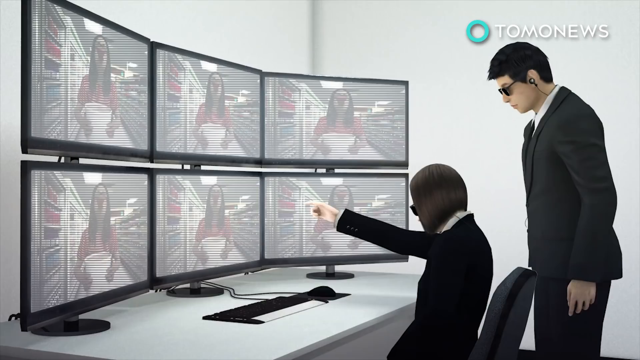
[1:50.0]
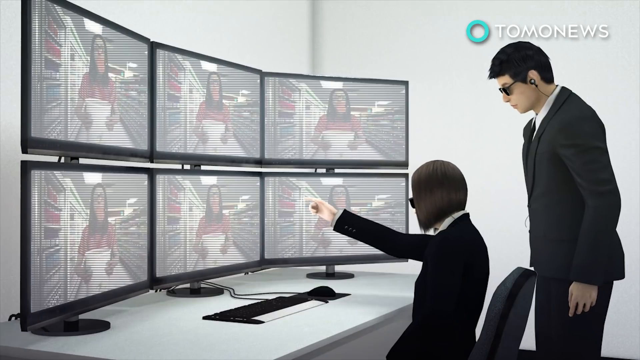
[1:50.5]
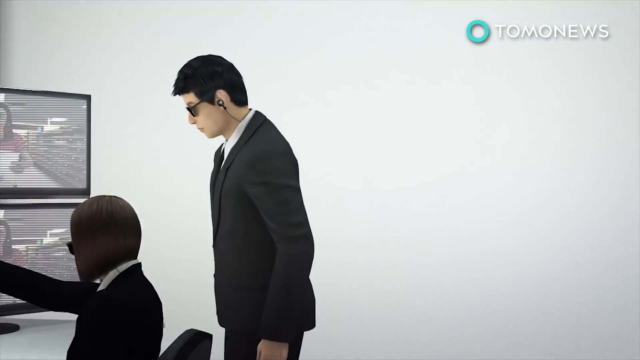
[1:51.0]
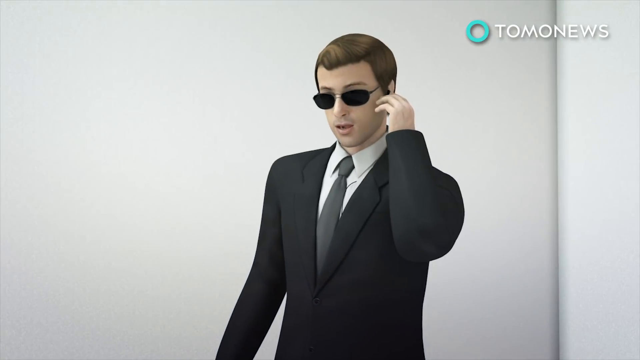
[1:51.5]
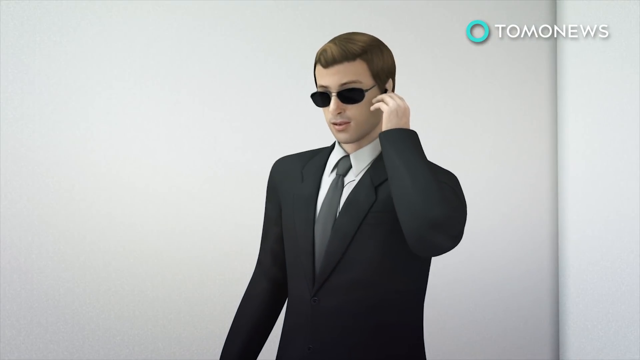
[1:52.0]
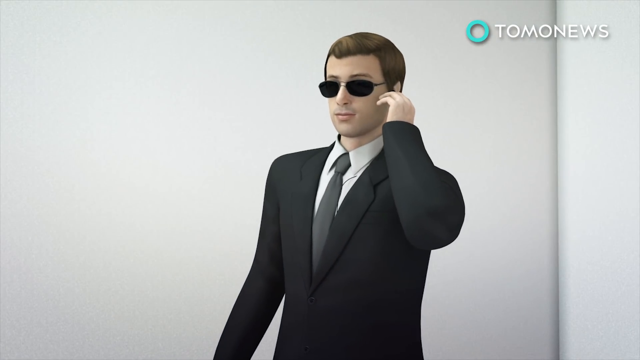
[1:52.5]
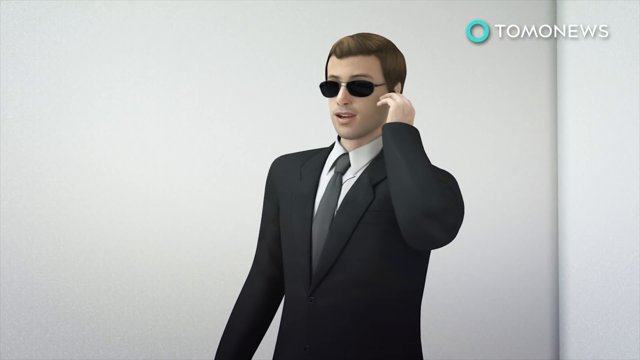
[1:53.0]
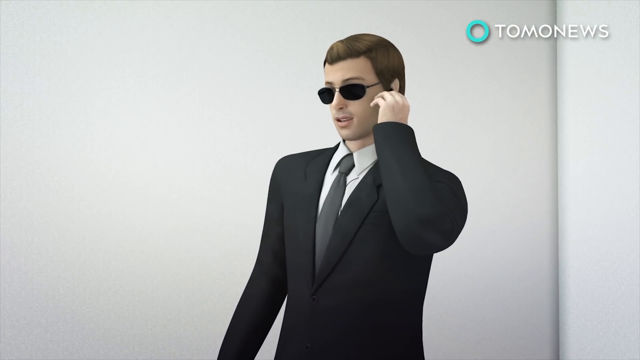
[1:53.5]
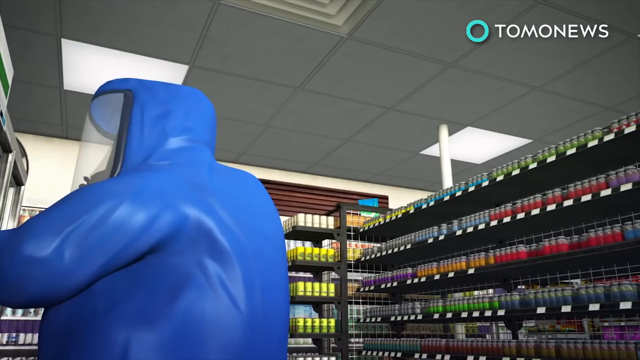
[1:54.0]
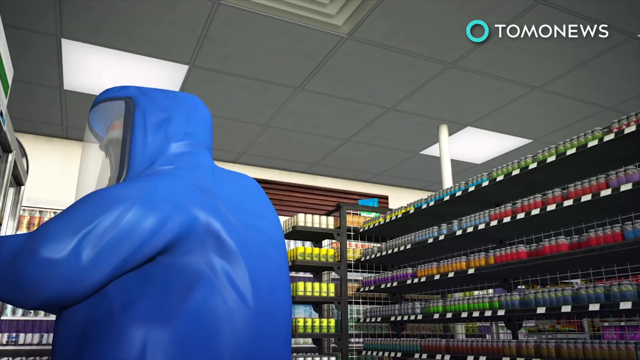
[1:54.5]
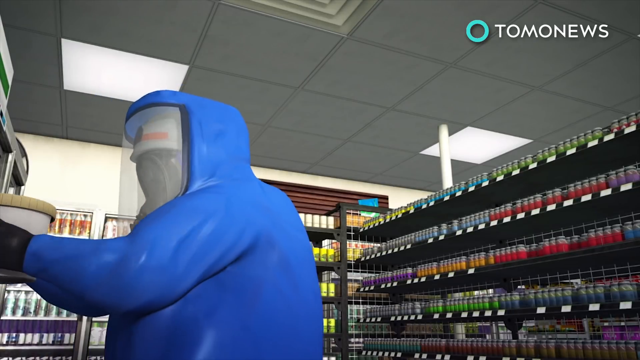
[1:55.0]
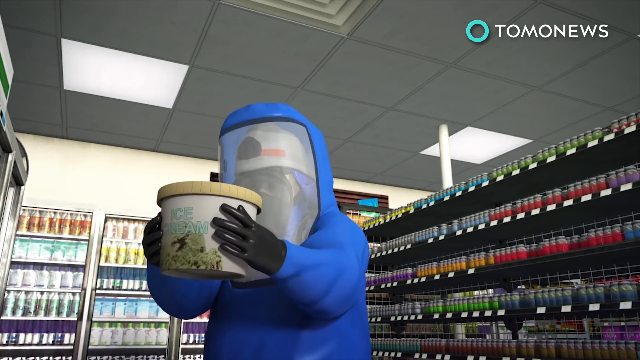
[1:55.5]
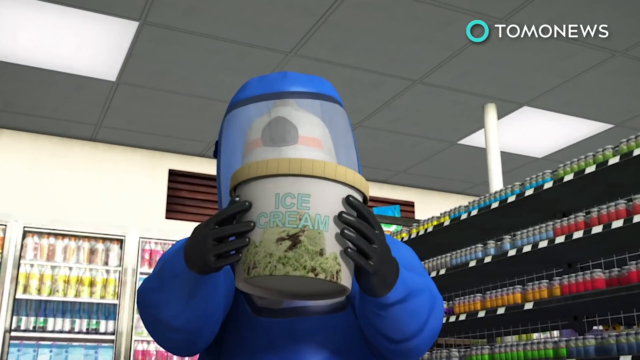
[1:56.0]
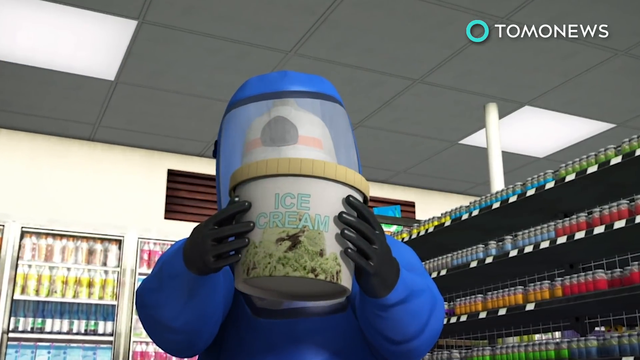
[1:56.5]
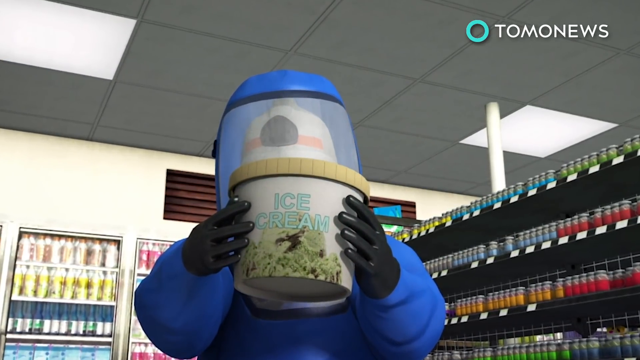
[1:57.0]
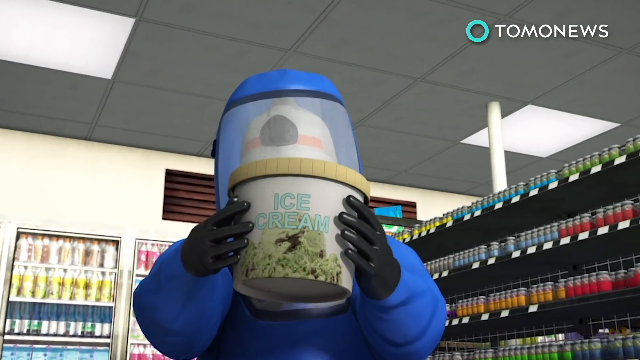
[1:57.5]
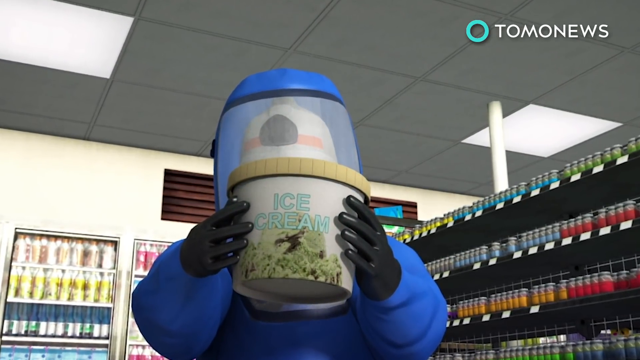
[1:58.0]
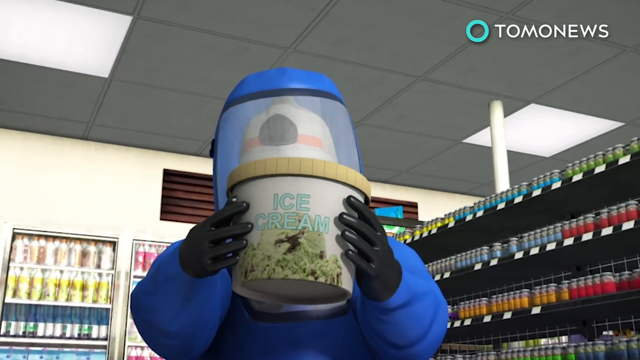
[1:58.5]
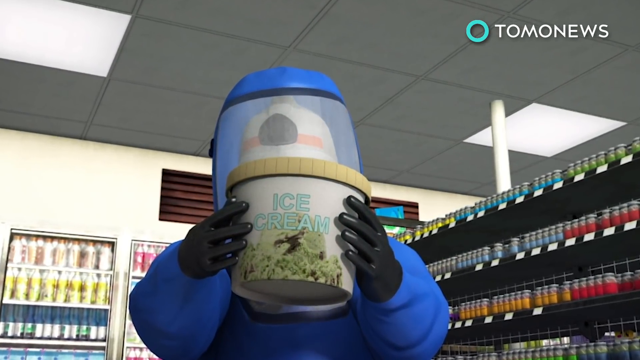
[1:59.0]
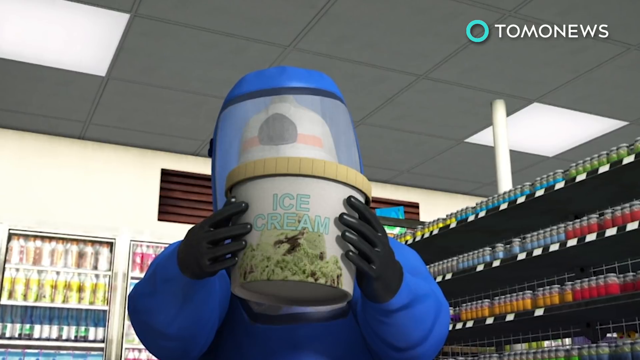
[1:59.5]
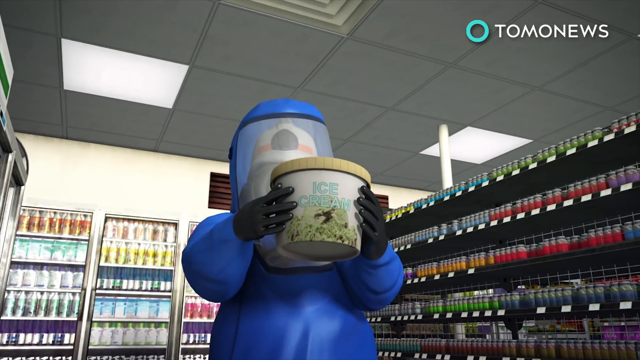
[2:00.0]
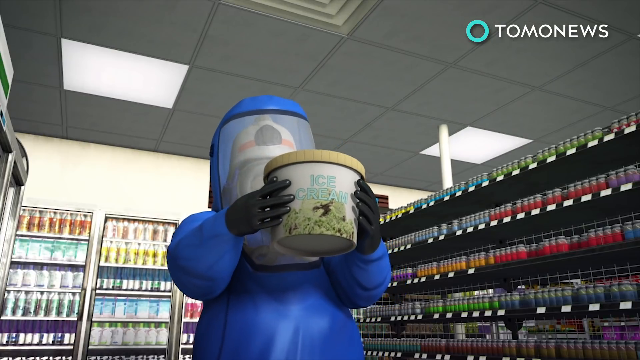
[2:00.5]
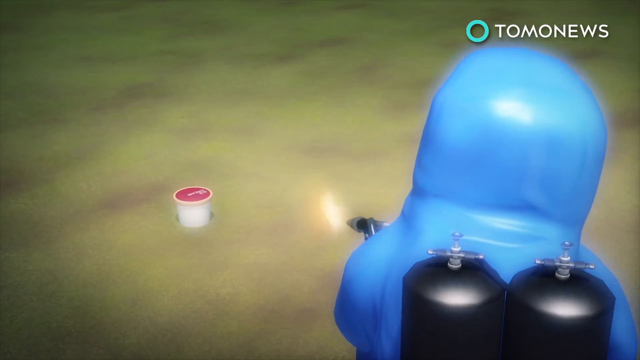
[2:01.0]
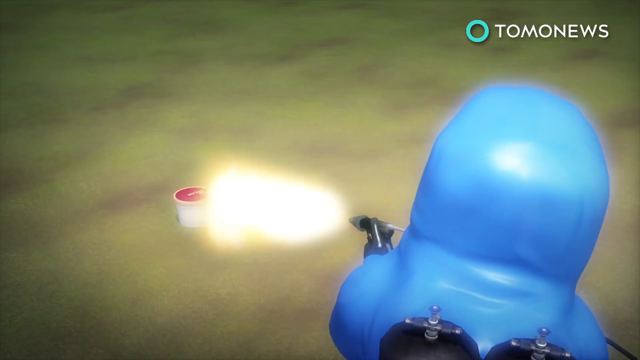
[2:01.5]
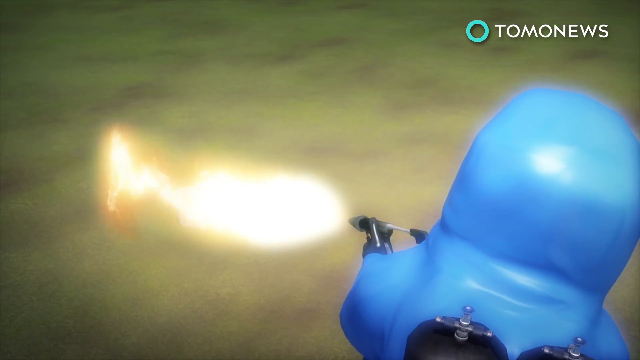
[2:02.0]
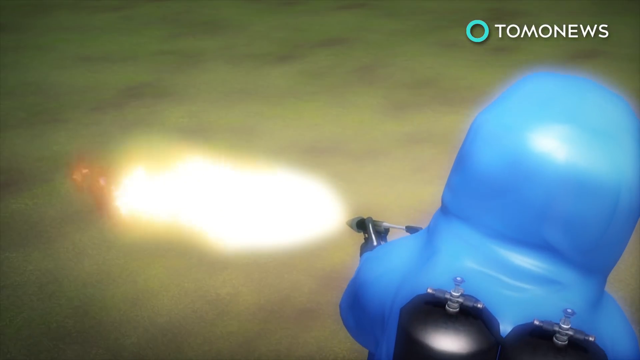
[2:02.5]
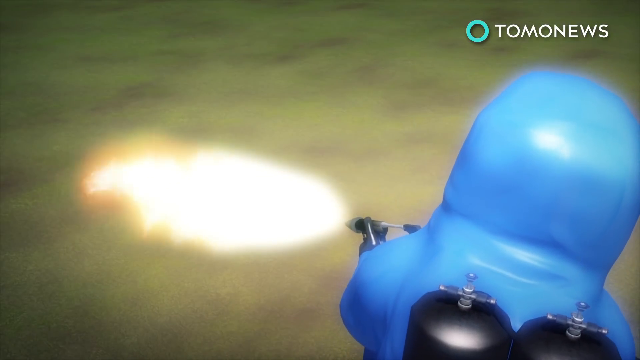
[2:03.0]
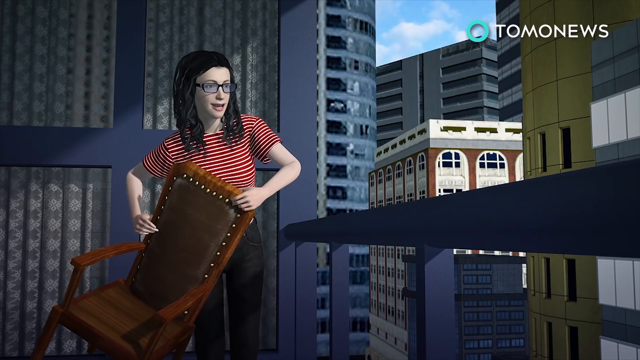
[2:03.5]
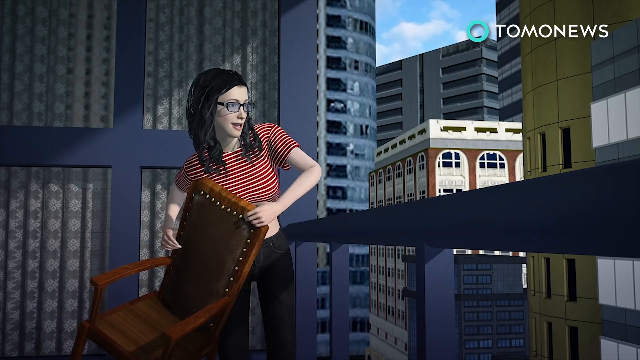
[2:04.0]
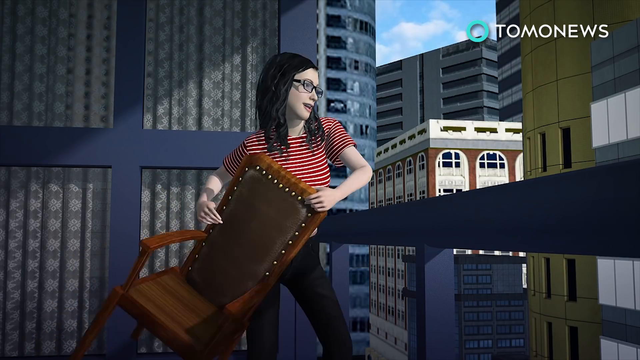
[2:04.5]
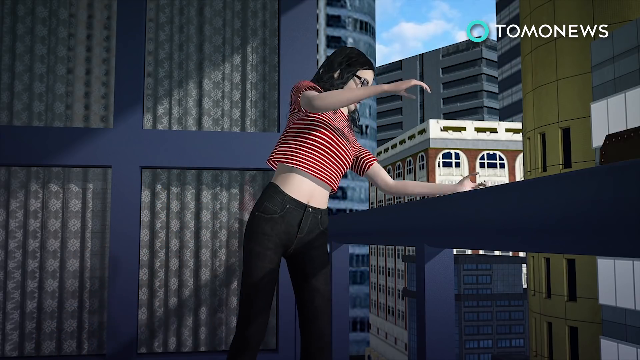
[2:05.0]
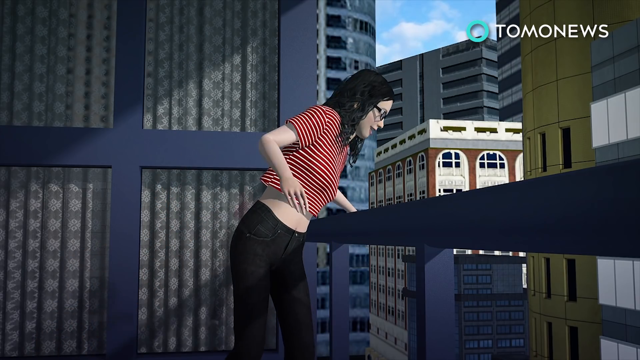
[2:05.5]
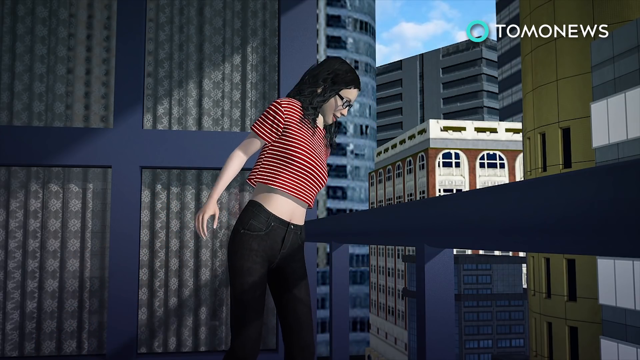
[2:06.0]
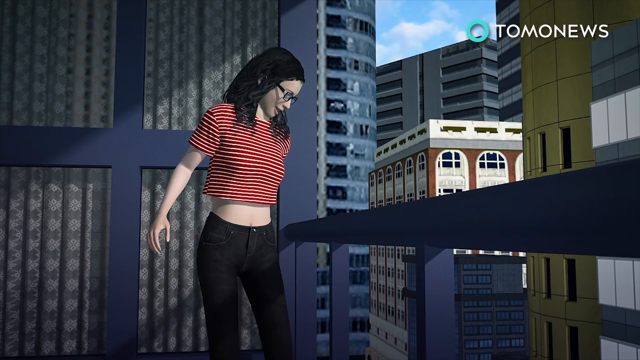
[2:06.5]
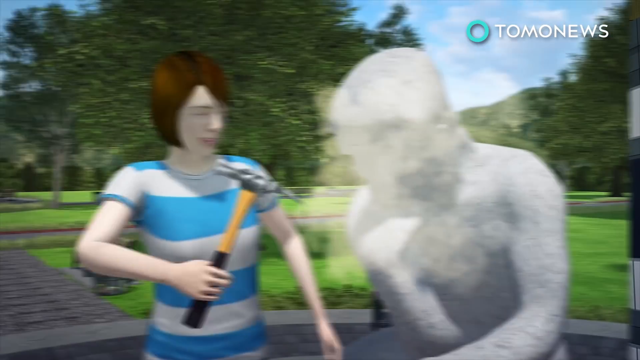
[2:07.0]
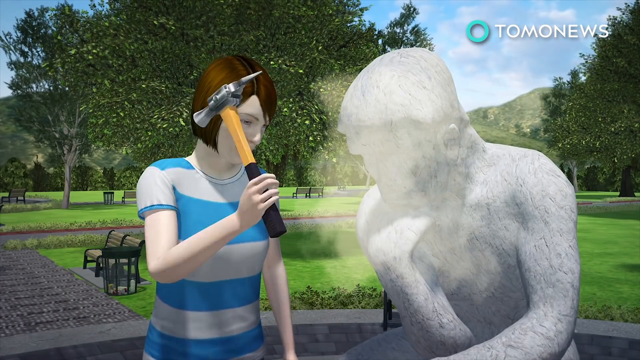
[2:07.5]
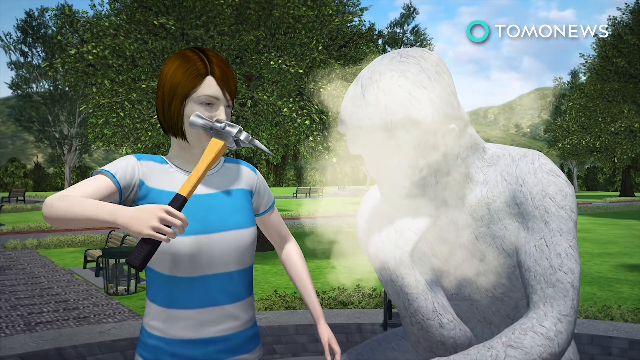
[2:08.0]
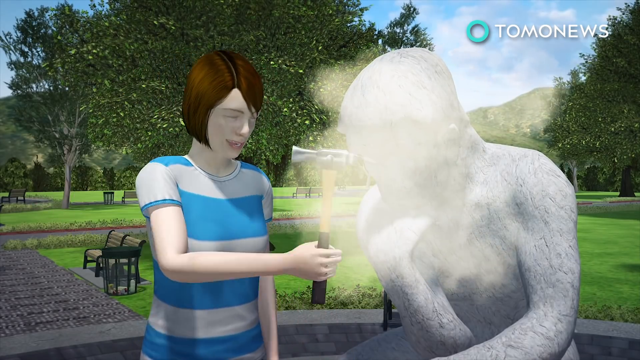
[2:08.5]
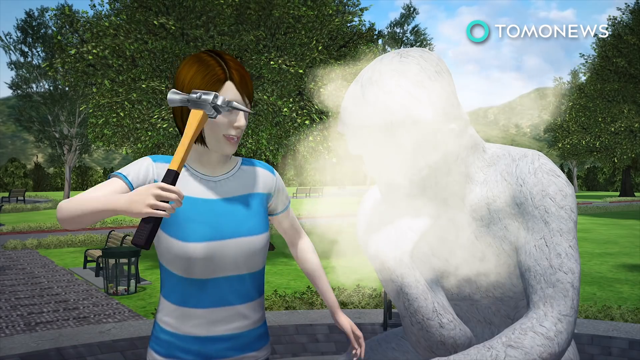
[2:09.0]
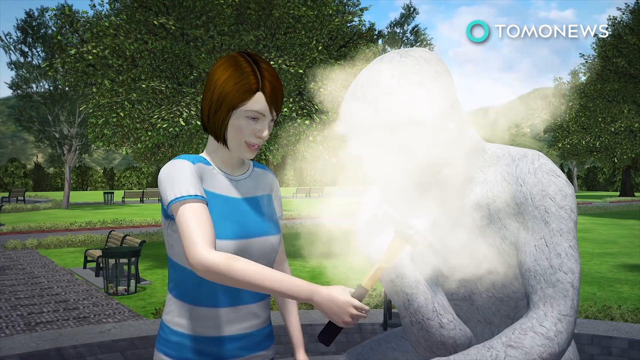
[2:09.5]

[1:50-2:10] Two security officers in black suits, a man and a woman, are watching a screen, apparently CCTV footage, with one pointing at the screen. In the store, a person in a blue jacket is busy doing something unclear; there is ice cream down on the floor and there is a fire. A lady upstairs holds a chair and throws it down. There is a decorative figure made in the shape of a person, and the lady is busy destroying it.